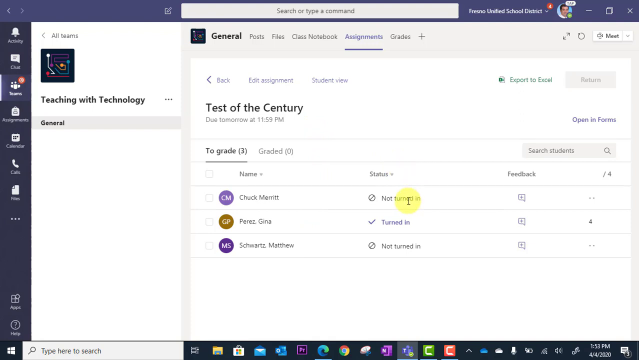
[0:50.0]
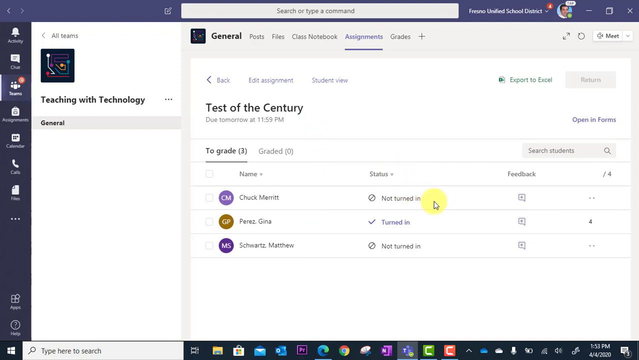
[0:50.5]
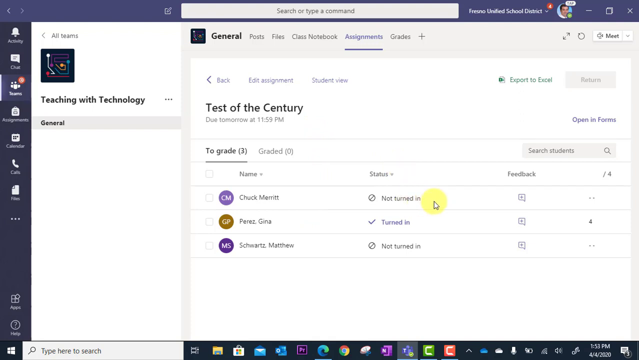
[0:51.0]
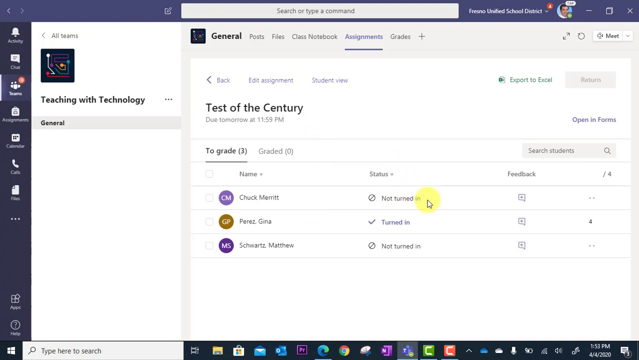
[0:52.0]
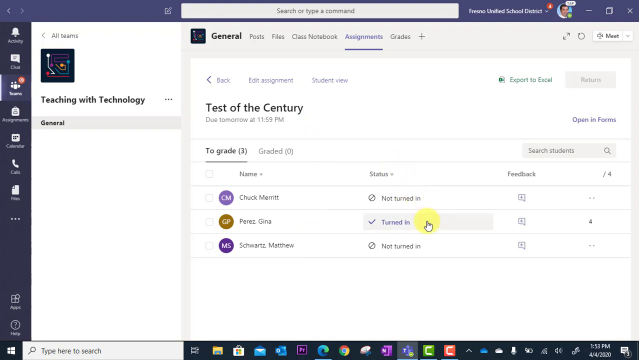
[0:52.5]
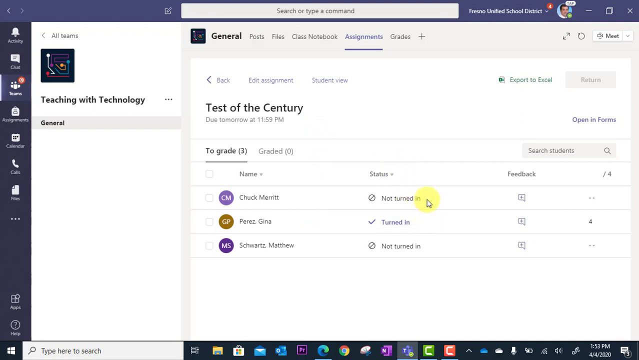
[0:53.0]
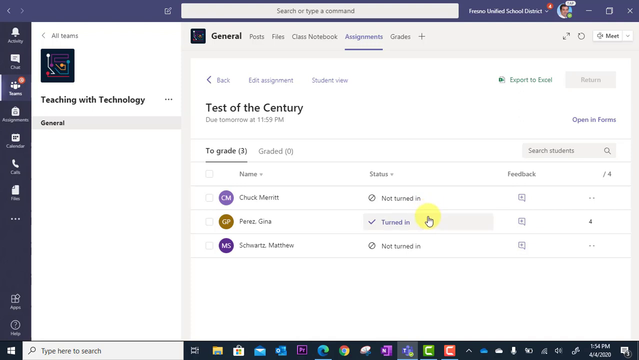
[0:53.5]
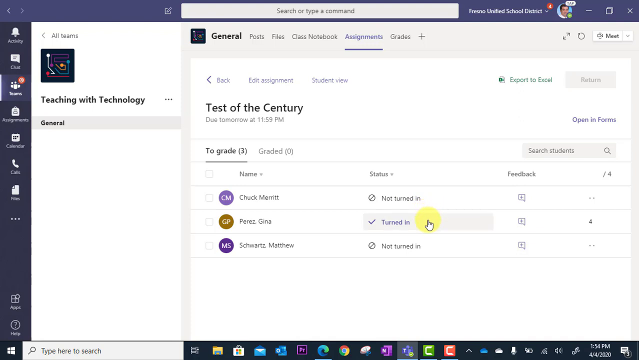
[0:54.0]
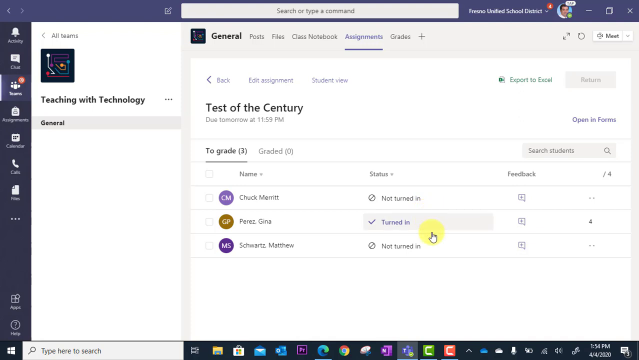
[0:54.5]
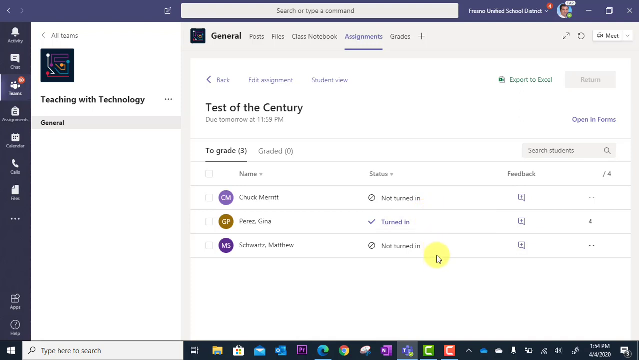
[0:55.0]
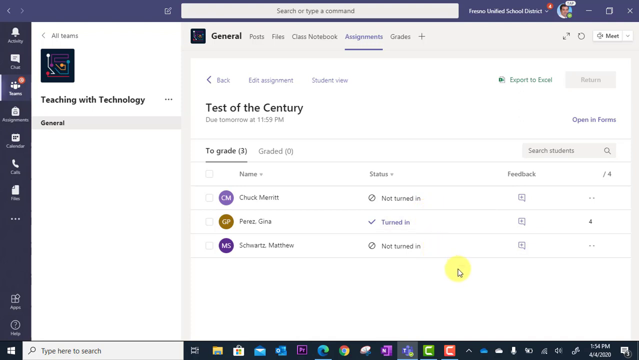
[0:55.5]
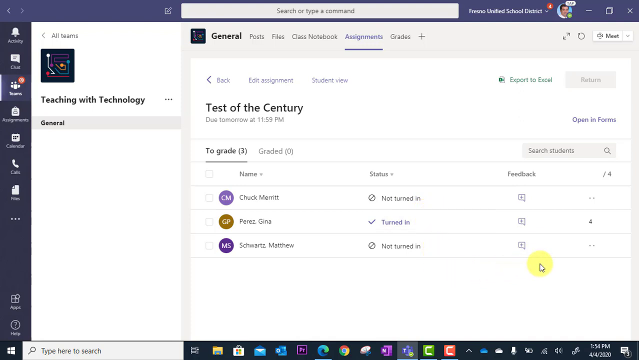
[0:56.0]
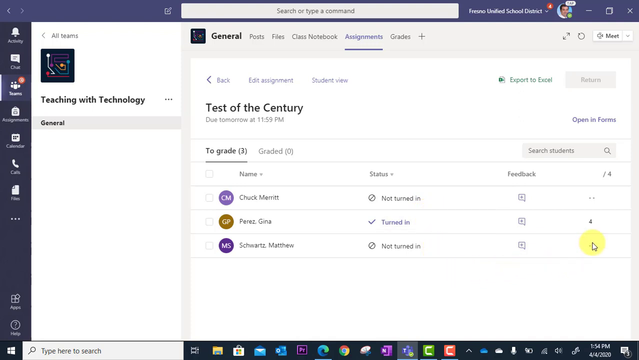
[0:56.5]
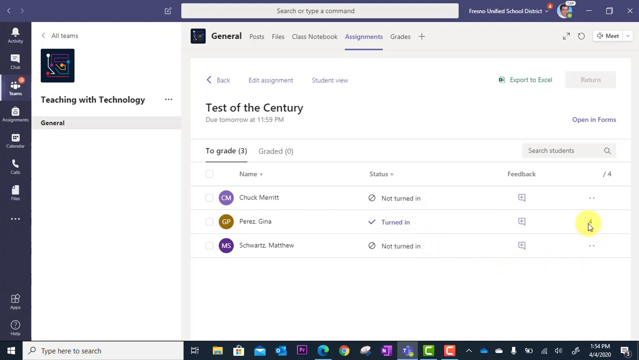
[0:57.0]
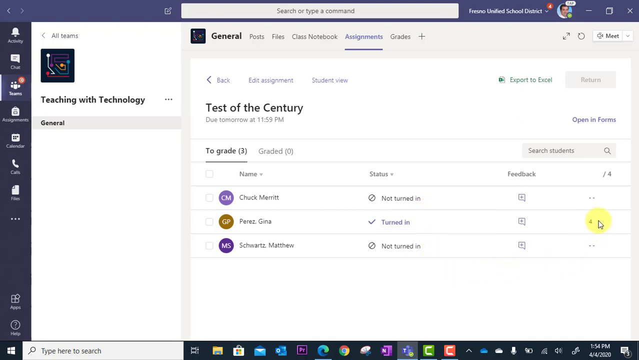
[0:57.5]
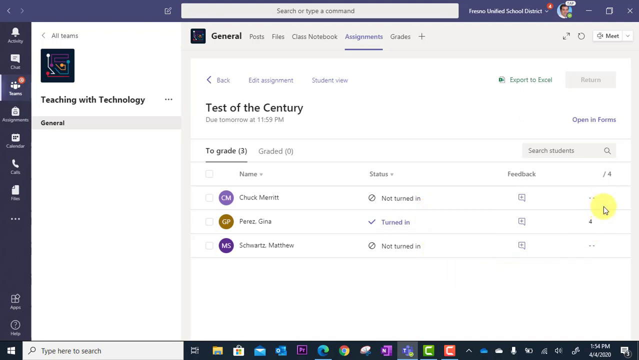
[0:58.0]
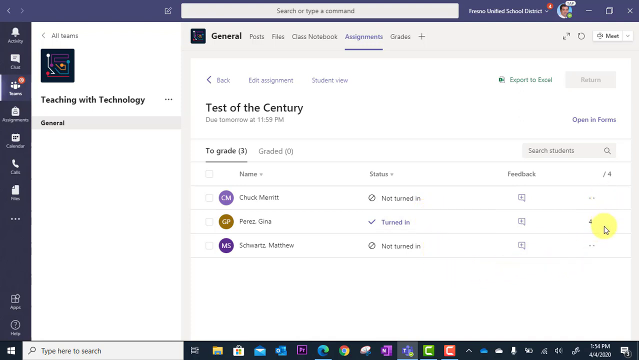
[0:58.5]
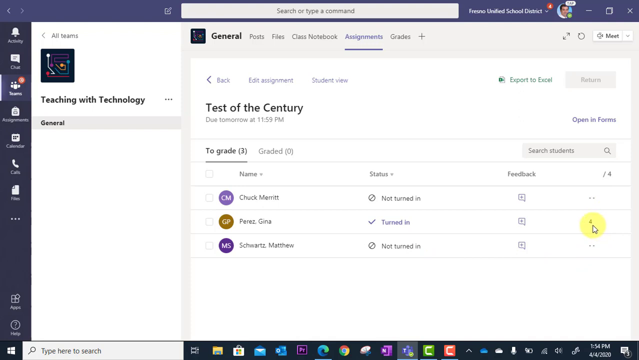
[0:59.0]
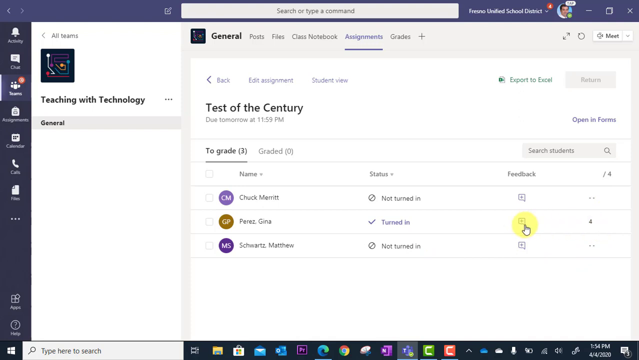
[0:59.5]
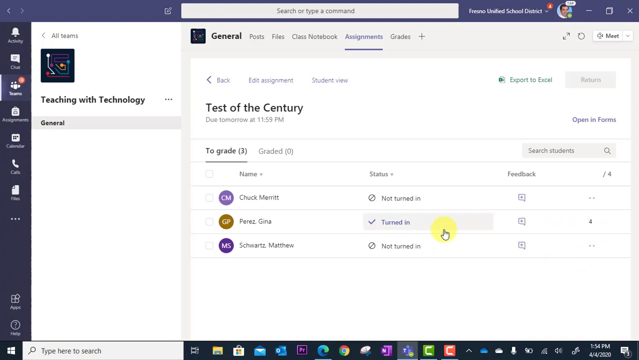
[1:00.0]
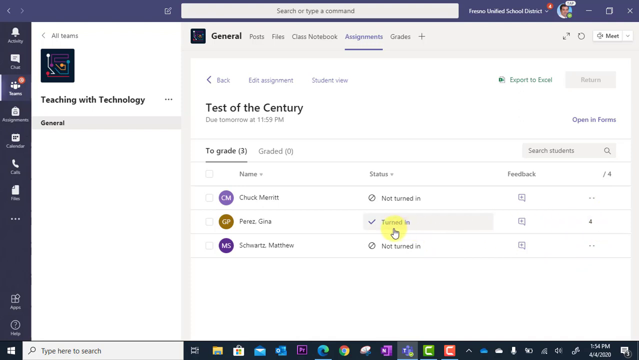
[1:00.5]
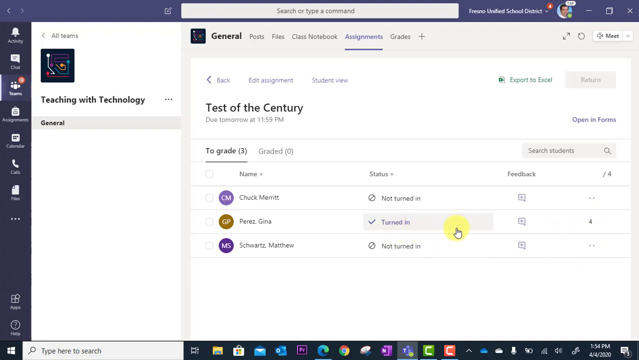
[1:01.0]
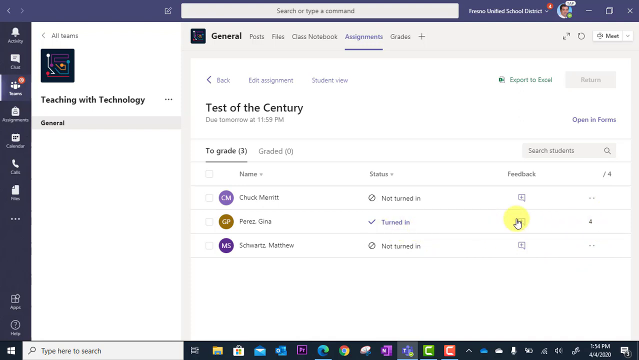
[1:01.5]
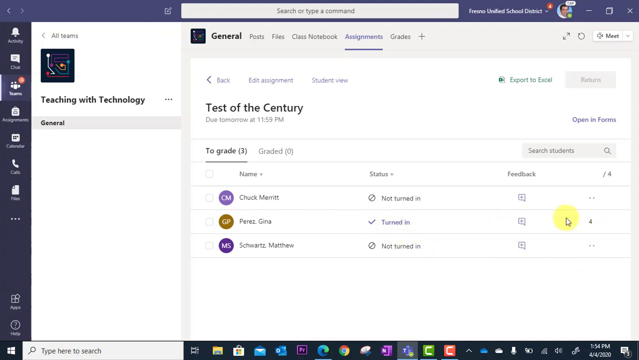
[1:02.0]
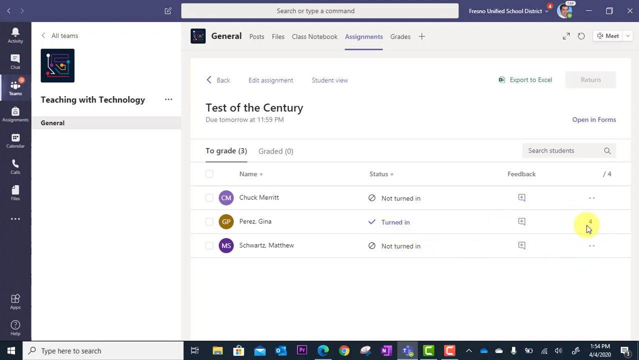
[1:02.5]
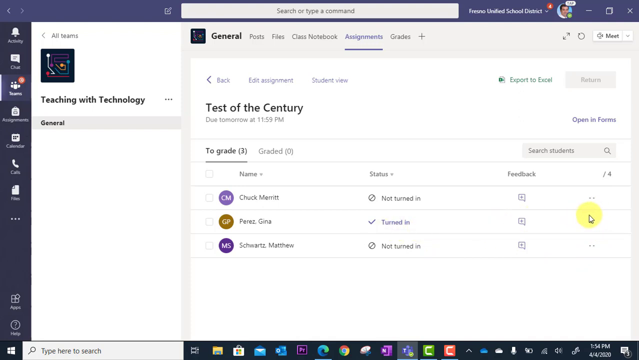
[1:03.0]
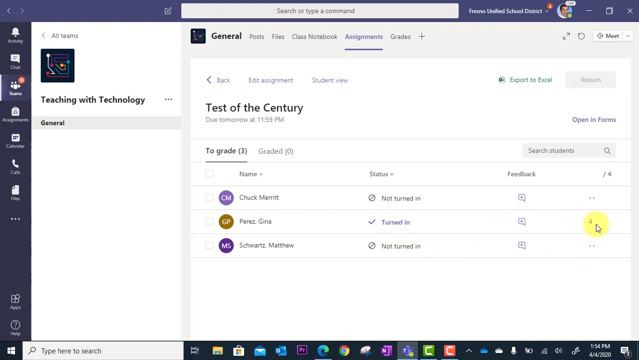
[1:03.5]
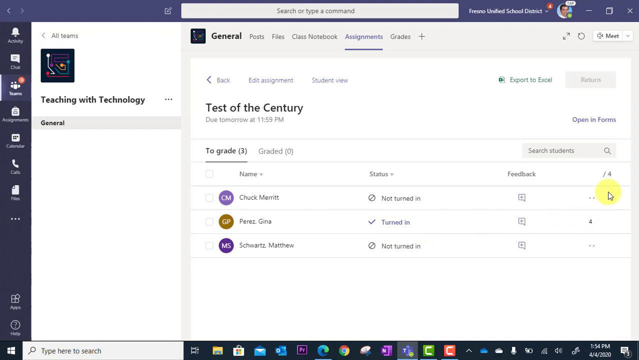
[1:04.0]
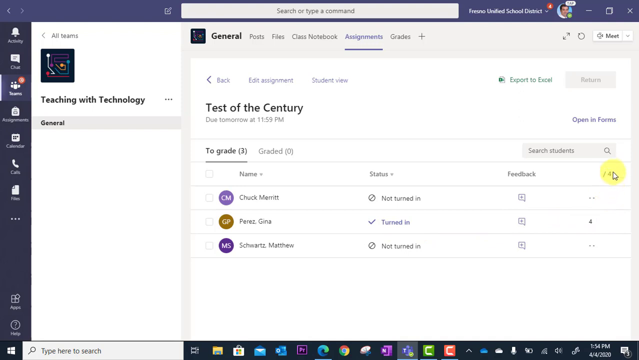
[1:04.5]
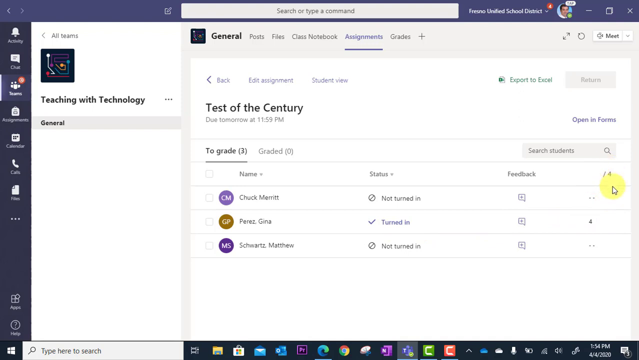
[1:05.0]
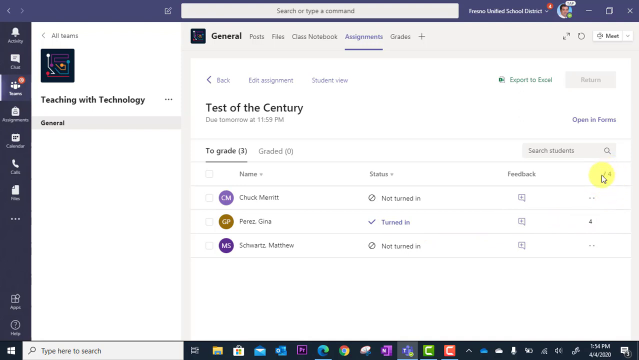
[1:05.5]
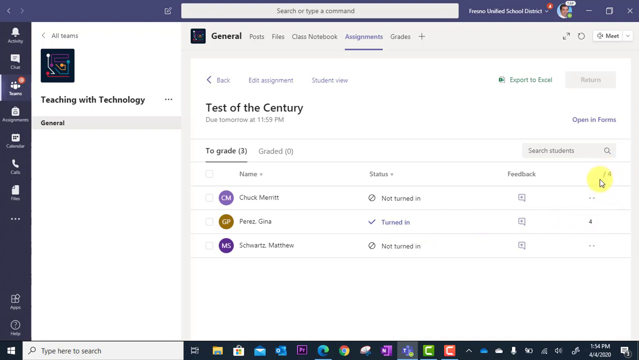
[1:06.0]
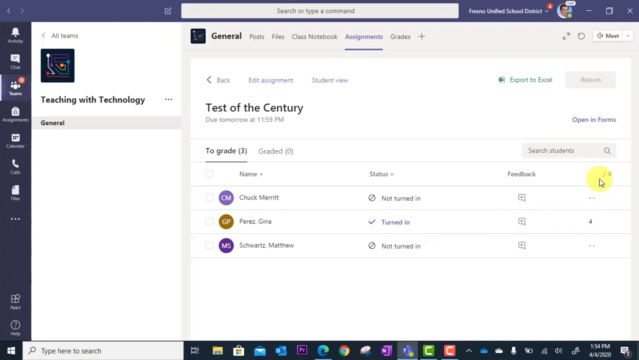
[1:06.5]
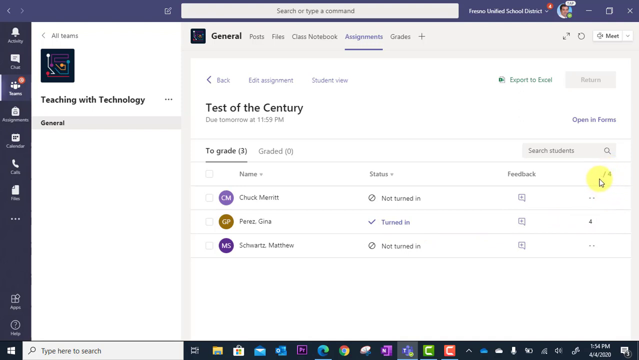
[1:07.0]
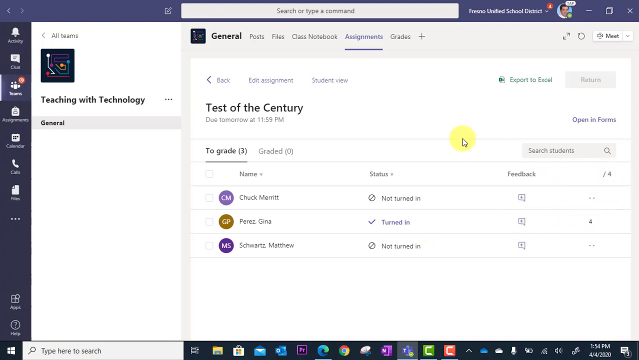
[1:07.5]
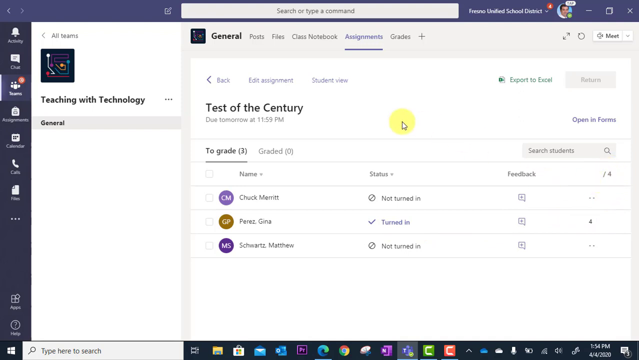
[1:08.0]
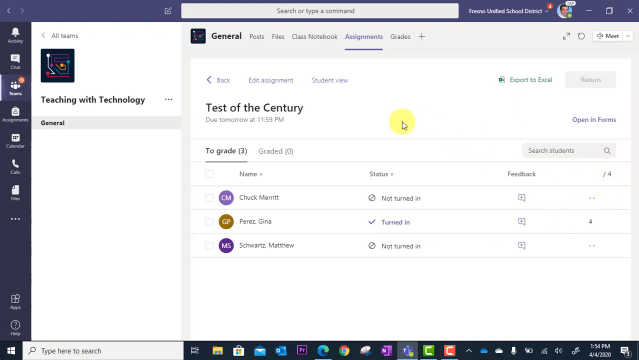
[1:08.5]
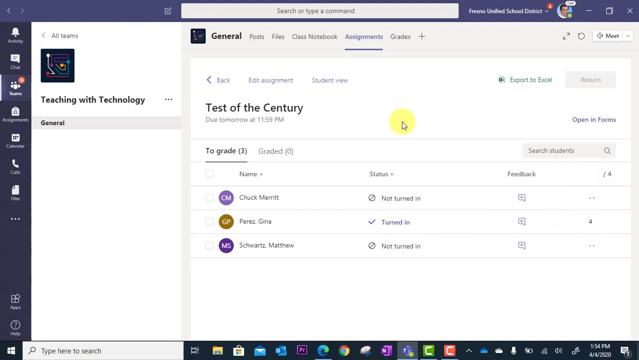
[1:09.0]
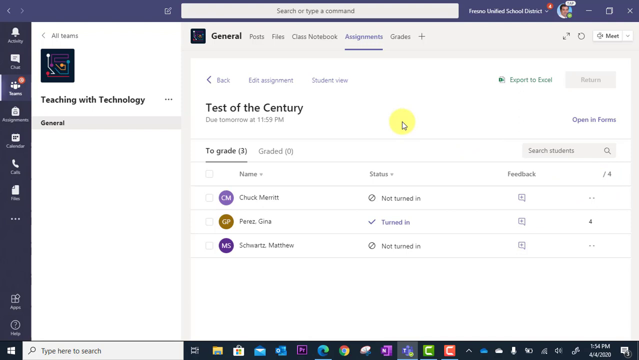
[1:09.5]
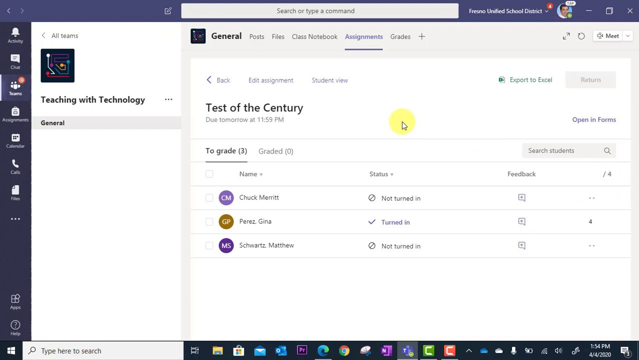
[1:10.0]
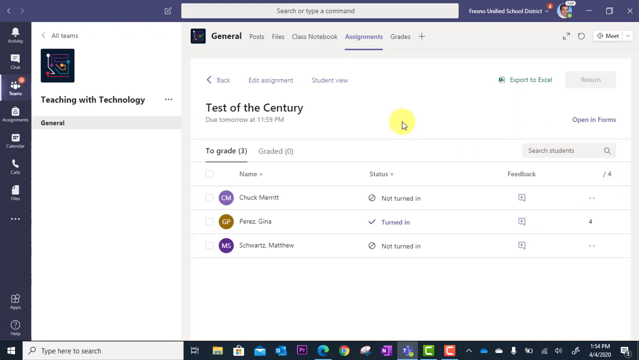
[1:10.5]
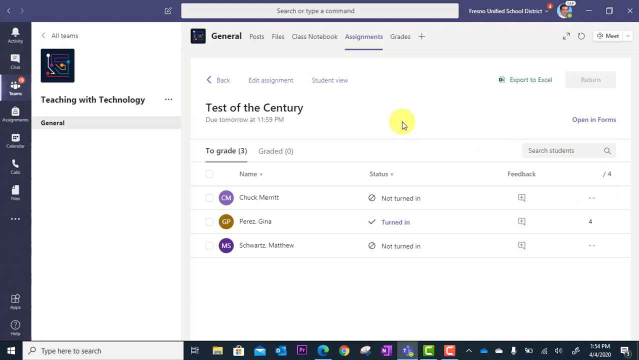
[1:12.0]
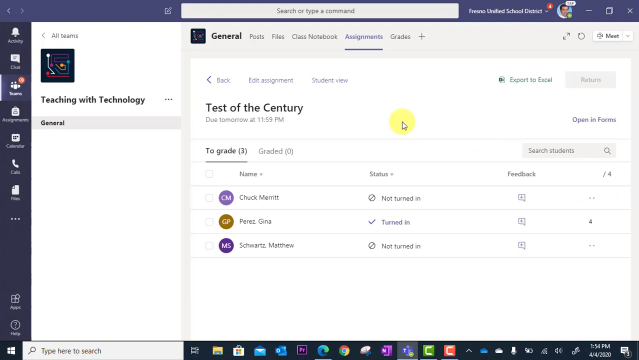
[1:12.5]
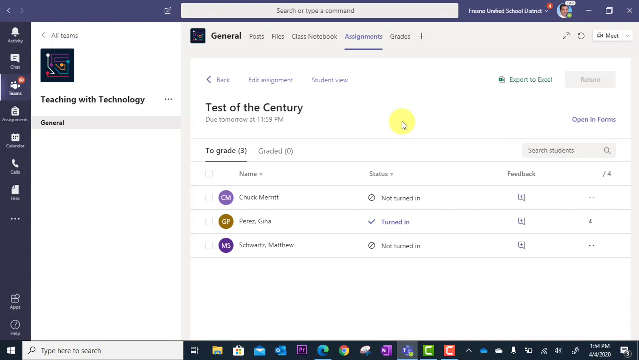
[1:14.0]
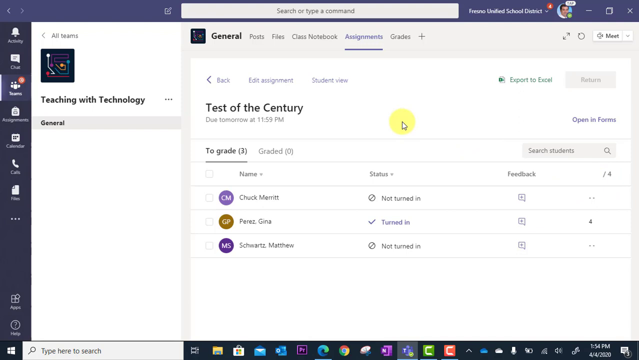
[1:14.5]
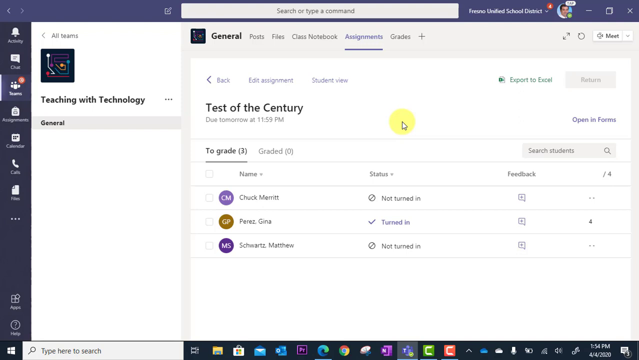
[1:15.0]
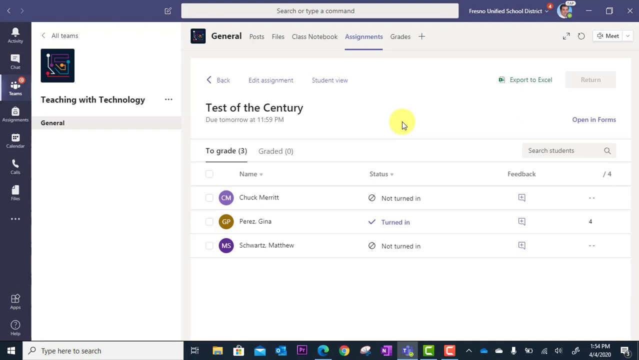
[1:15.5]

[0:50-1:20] The Microsoft Teams interface for the Teaching with Technology class remains in the detailed view for the "Test of the Century" assignment. The layout stays consistent: the assignment title at the top, the due date directly beneath it, and the two tabs, To Grade and Graded, just below the header. The To Grade tab is active, showing a table of three students with their submission statuses and feedback. Chuck Merritt's row shows "not turned in" under the status column with the feedback column empty. Gina Perez's row shows "turned in" with a perfect score of four in the feedback column. Matthew Schwartz's row also shows "not turned in" with no score entered. Each student's initials appear in a circular icon to the left of their name: CM in light brown for Chuck Merritt, GP in yellow-gold for Gina Perez, and MS in purple for Matthew Schwartz. The screen remains mostly static, with only minor cursor adjustments or movement across the central area. The interface keeps the same light background, with the navigation sidebar on the left and the system taskbar at the bottom displaying multiple pinned program icons. A search bar labeled "search students" stays at the top right of the table, with an "export to Excel" option visible next to it. The student statuses and scores do not change.